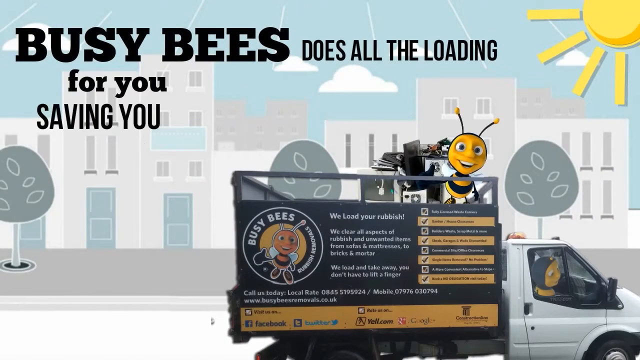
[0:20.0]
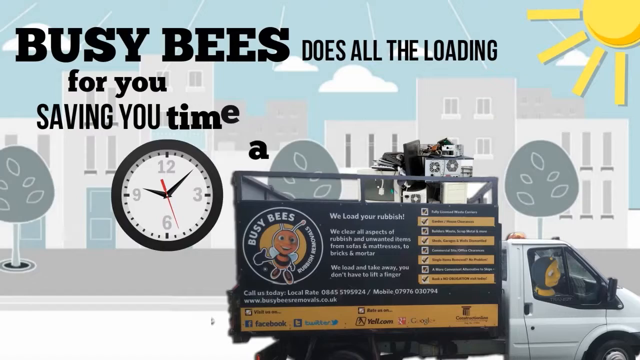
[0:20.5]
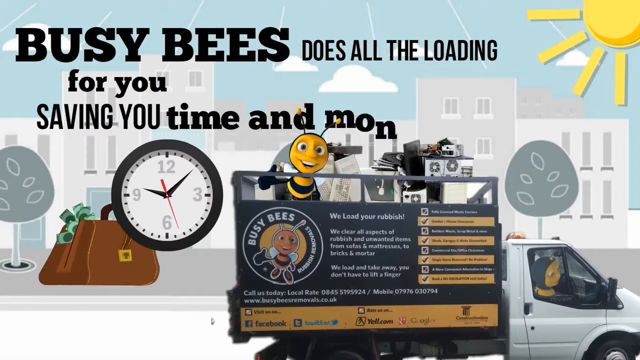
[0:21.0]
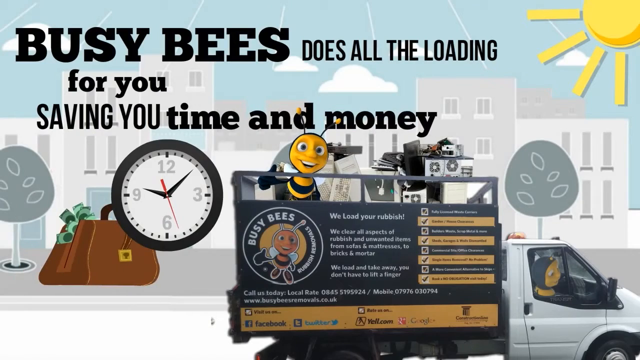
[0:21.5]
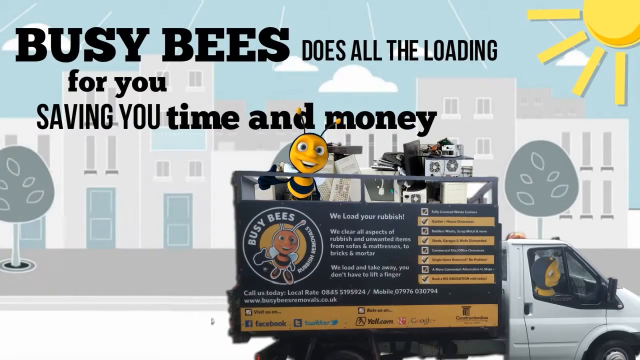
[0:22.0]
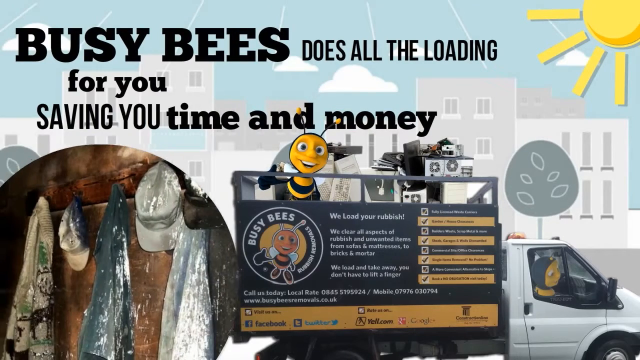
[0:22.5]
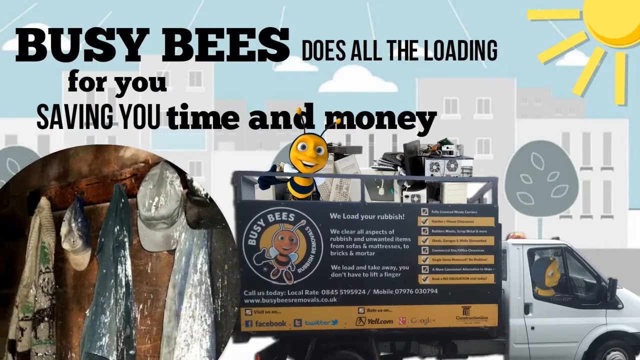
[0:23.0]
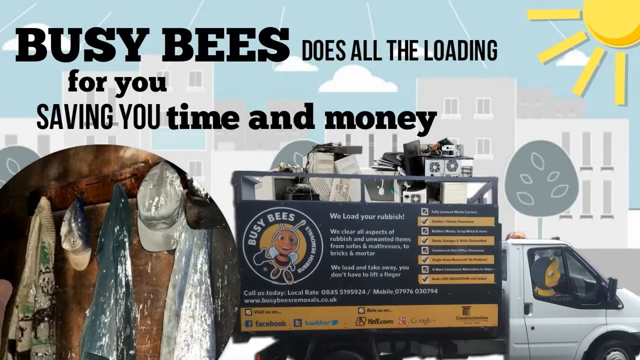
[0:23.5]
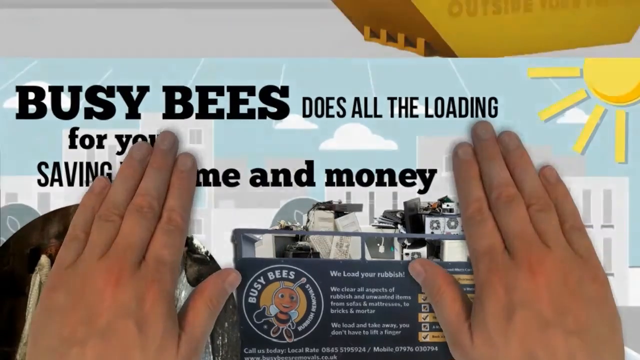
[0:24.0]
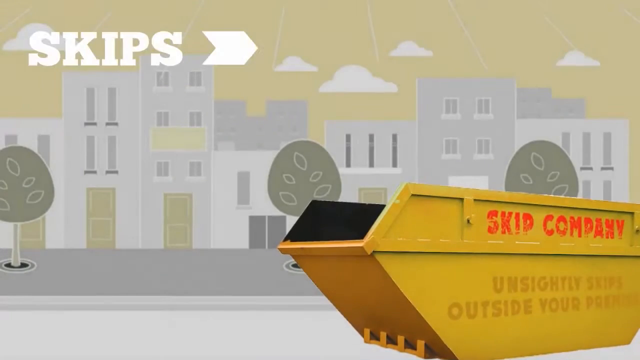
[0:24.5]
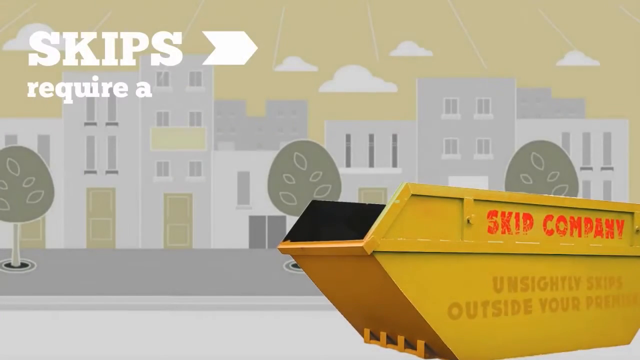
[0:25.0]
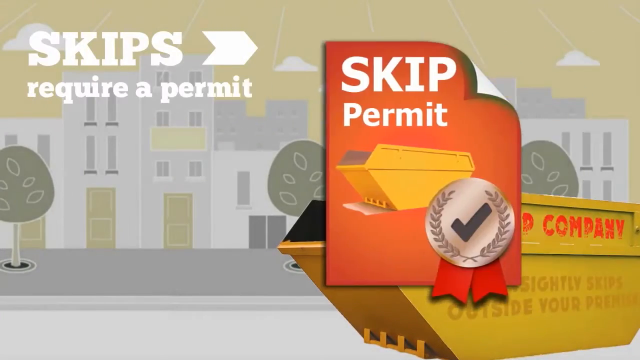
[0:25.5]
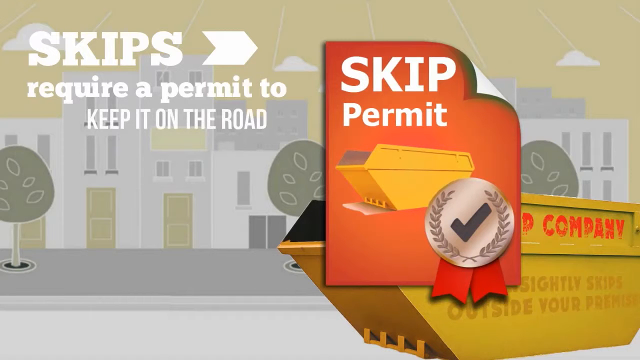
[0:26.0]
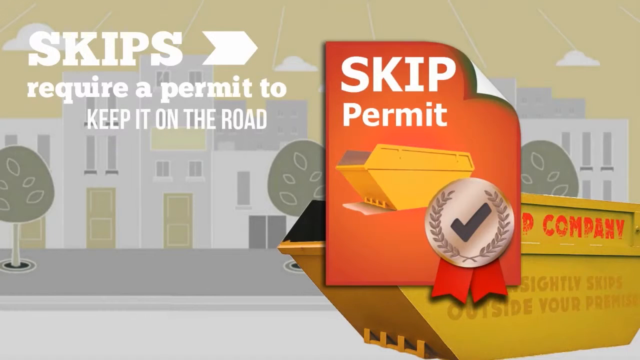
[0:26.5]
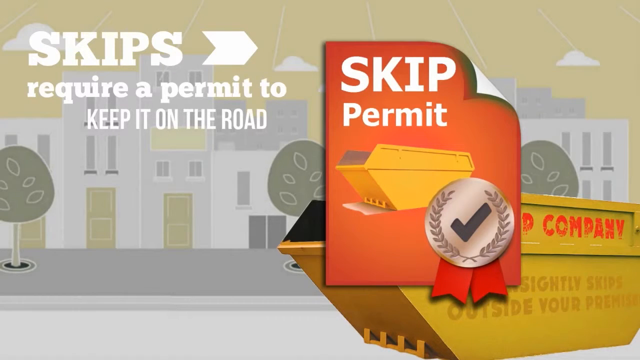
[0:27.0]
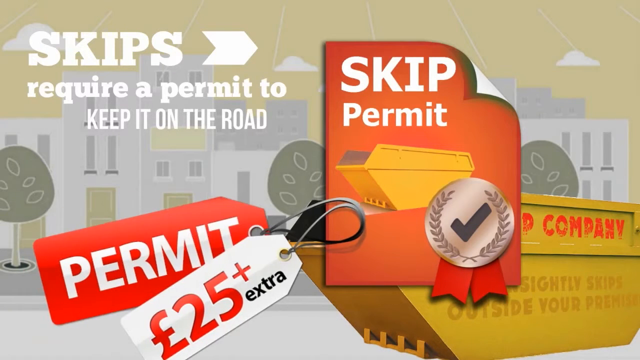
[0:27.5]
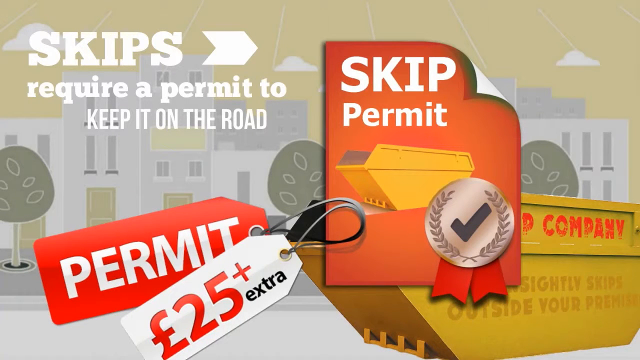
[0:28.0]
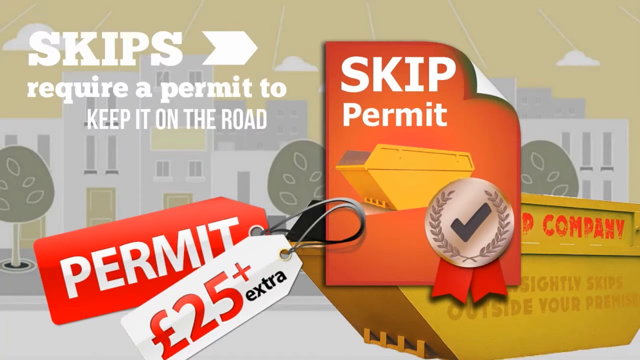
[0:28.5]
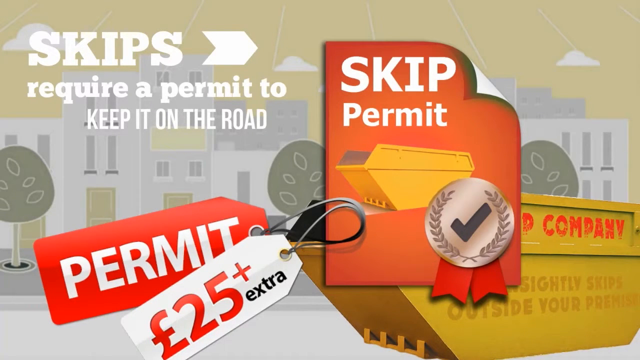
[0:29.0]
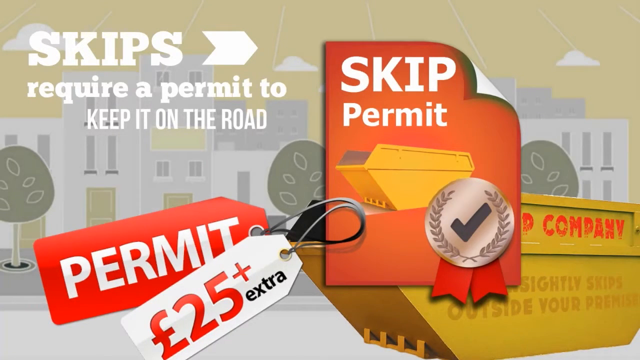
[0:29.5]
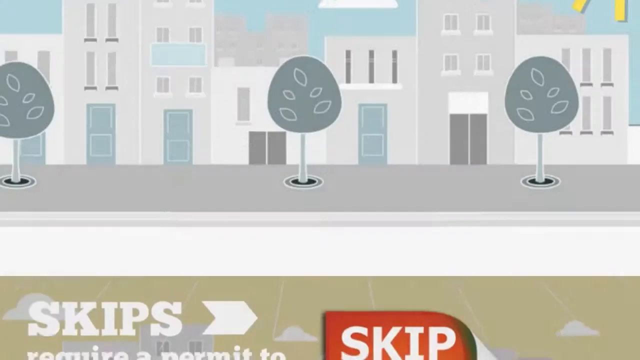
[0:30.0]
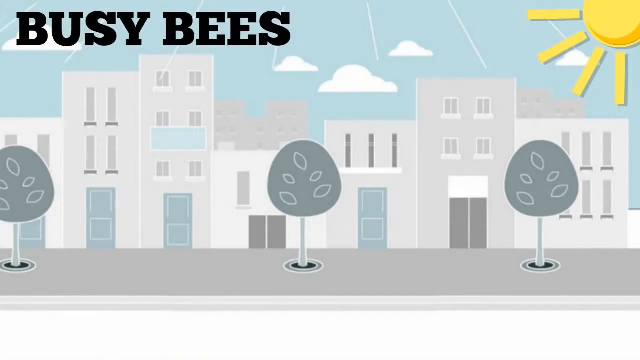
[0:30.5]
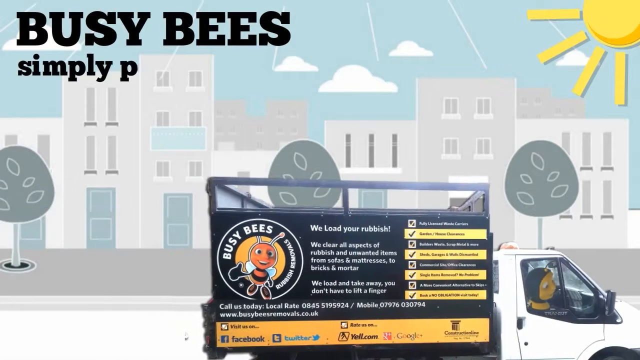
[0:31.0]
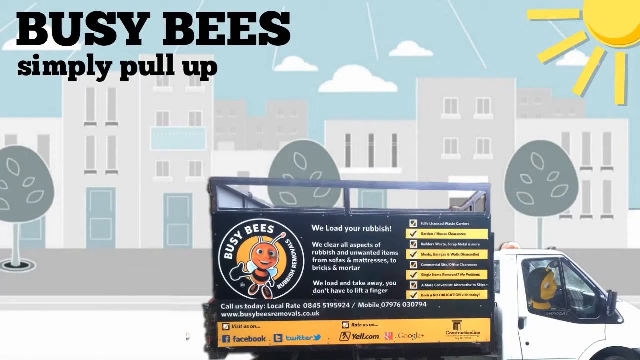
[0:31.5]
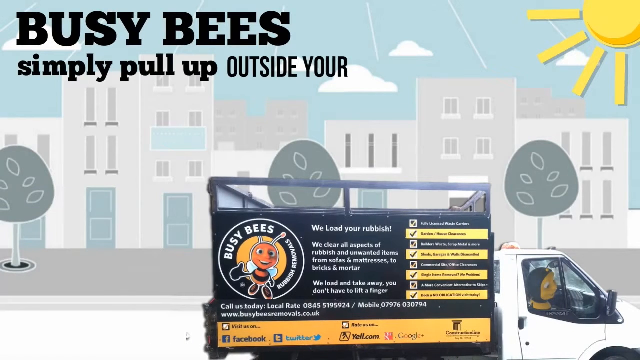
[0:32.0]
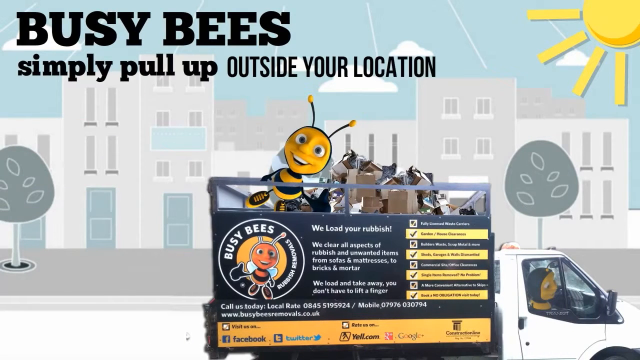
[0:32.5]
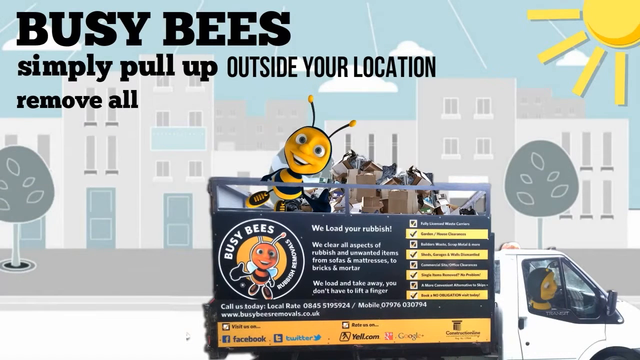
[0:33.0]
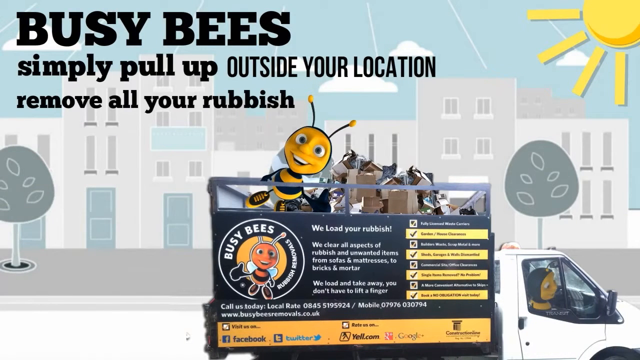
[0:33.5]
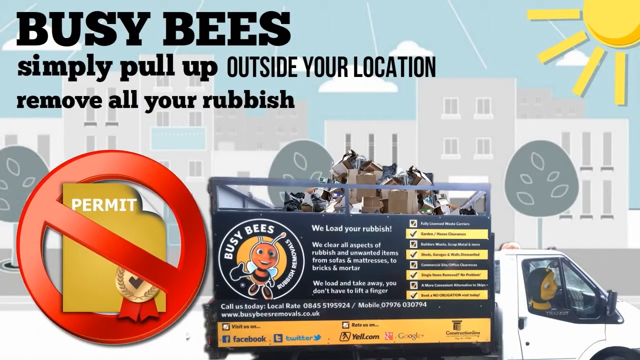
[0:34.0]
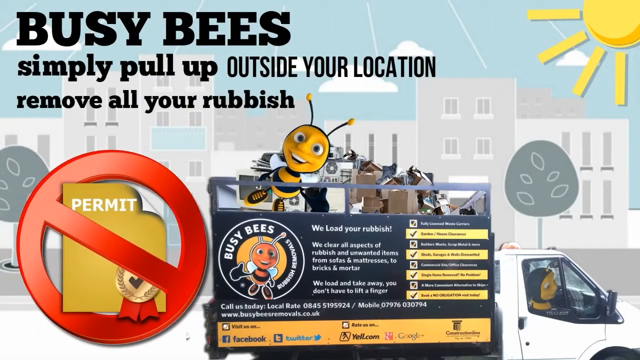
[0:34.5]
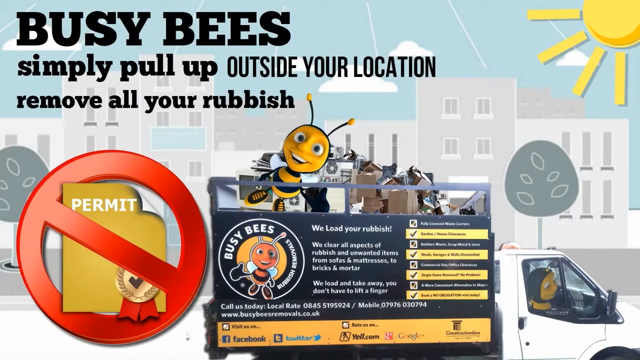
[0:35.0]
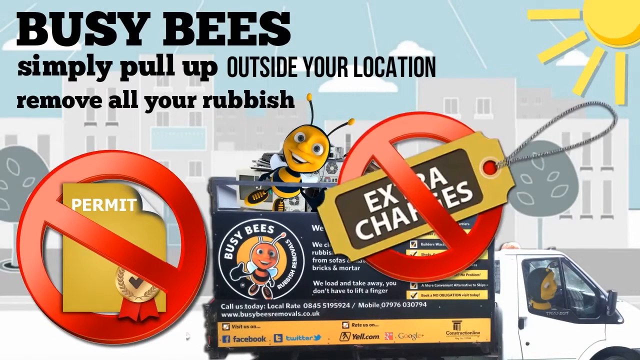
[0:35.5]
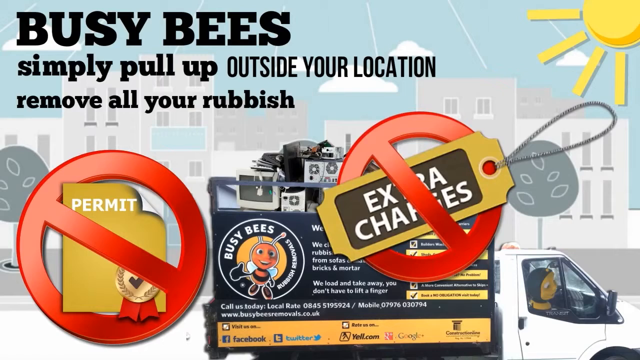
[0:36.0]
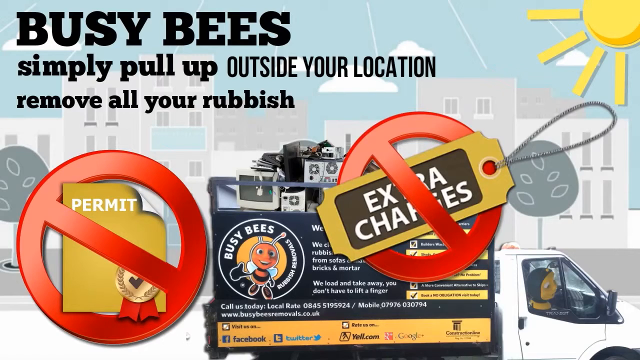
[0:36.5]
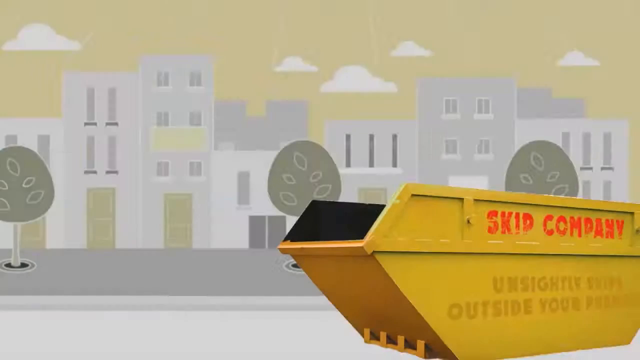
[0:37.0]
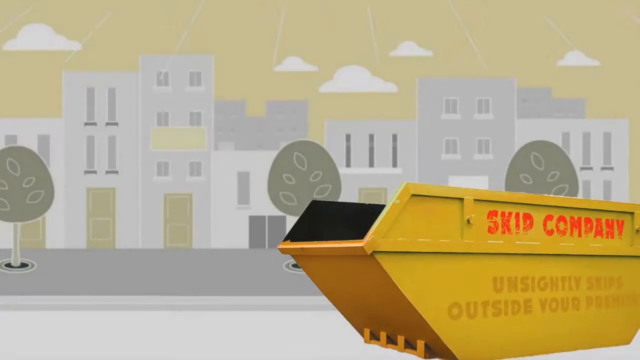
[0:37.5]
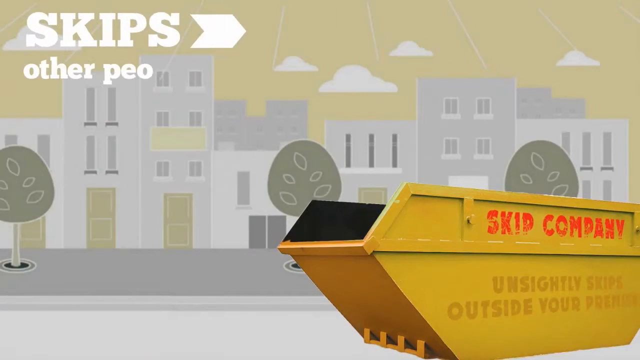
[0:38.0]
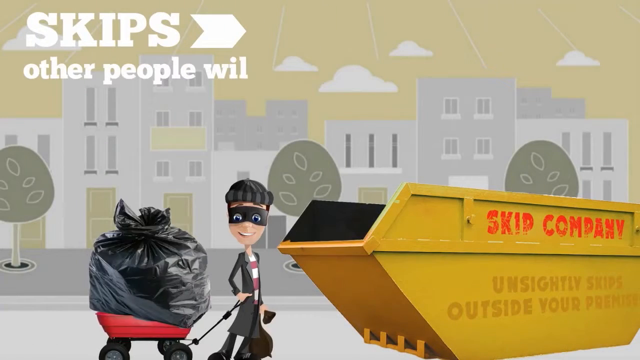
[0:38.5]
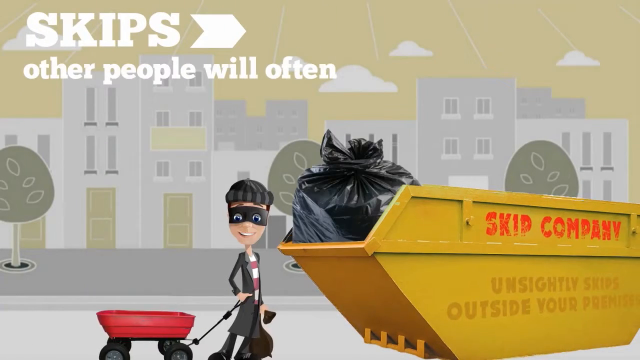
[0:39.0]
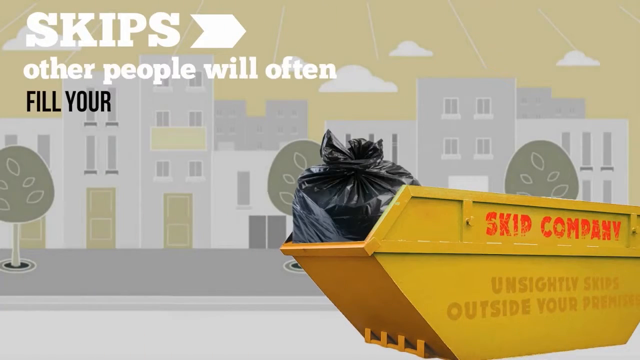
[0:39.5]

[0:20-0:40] Captions at the top read "Busy Bees does all the loading for you saving you time and money." On the right, one cartoon bee is in the back of a truck and another is inside driving it, with the driver's section of the truck visible in the bottom right corner. The business details are shown on the side of the truck. On the left is an image of hanging clothes and hanging hats. Two hands are then placed on top of all this information, one on the left and one on the right. In the top left area, captions read "skips require a permit to keep it on the road," and on the right is a cartoon skip permit with a price tag showing it costs 25 pounds sterling extra. The scene changes, and captions in the upper left read "Busy Bees simply pull up outside your location, remove all your rubbish." The truck appears on the right, and on the left is a cartoon permit with a red slash through it, alongside a tag for extra charges that also has a red slash through it. In the next scene, a cartoon character on the bottom left dumps black garbage bags into the yellow container labeled "Skip Company."